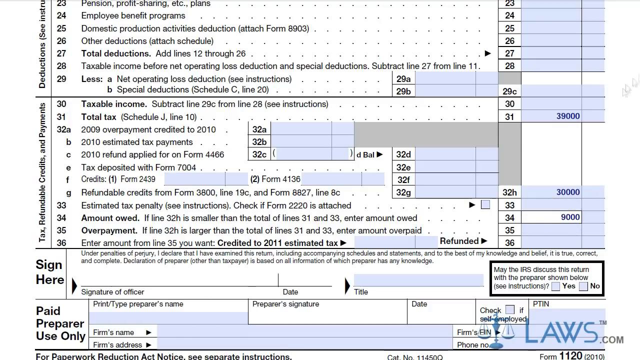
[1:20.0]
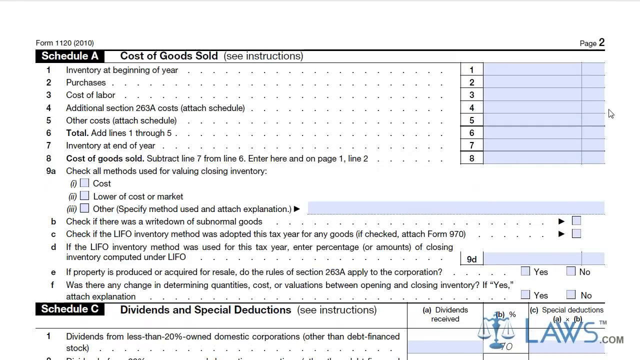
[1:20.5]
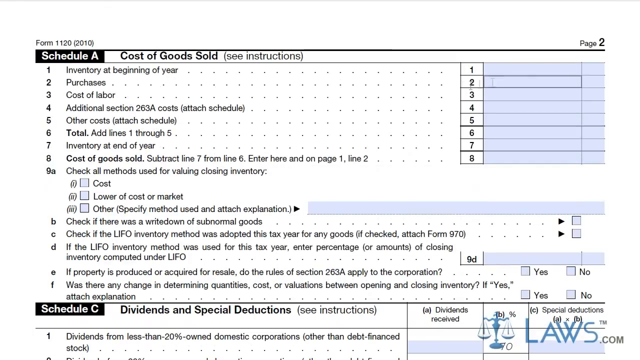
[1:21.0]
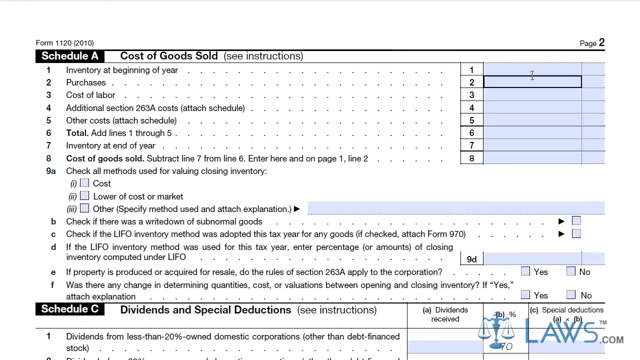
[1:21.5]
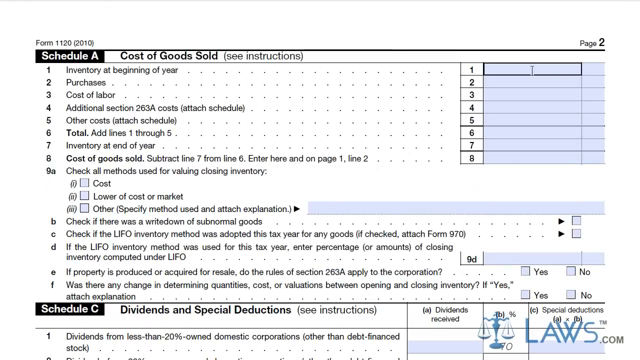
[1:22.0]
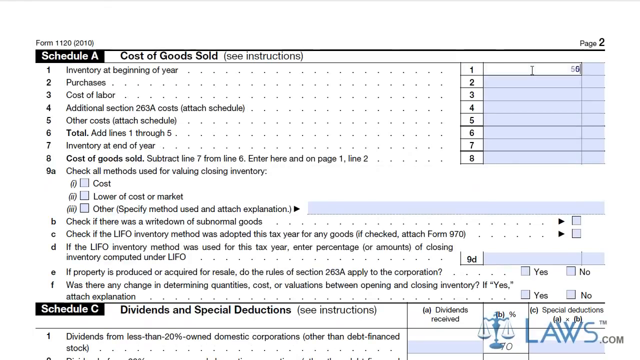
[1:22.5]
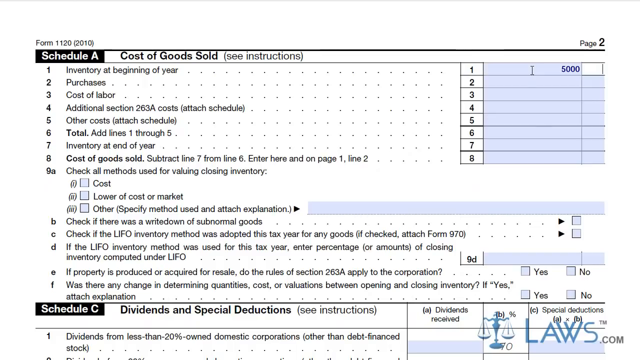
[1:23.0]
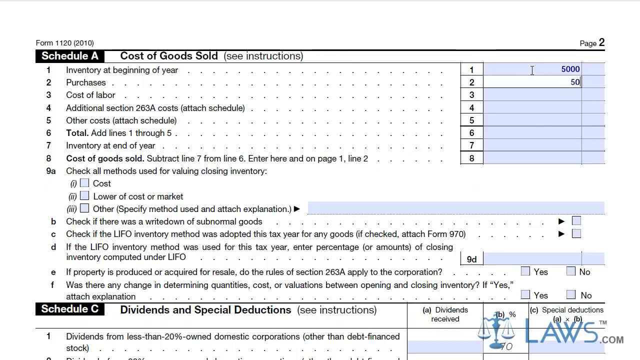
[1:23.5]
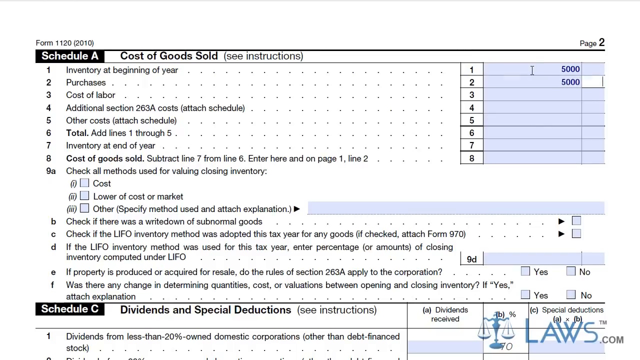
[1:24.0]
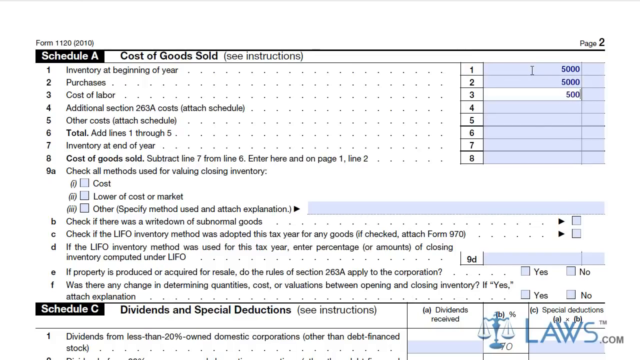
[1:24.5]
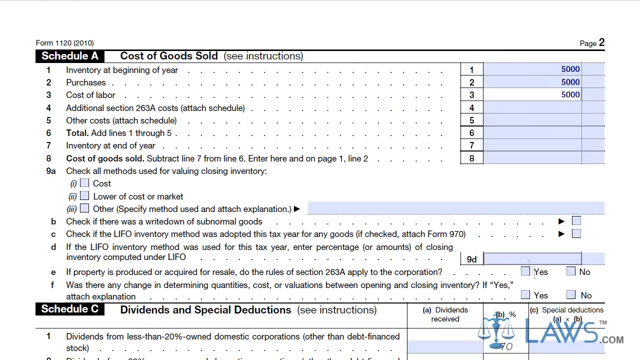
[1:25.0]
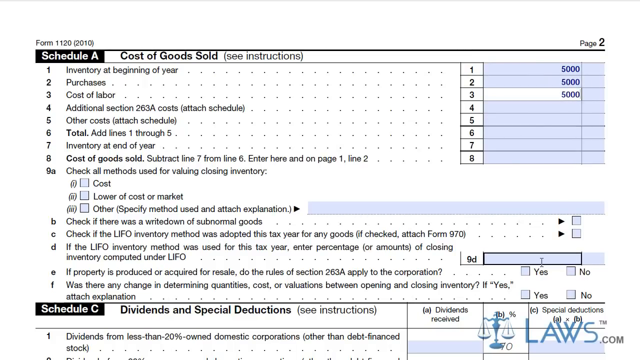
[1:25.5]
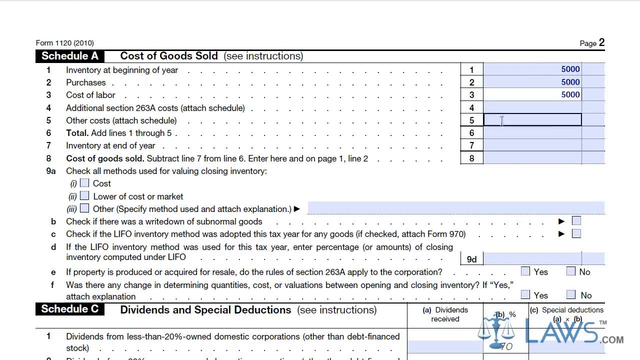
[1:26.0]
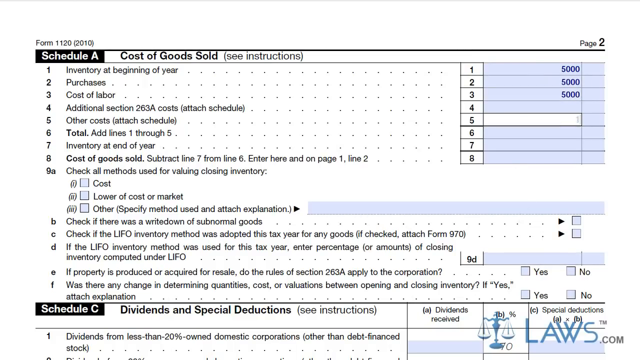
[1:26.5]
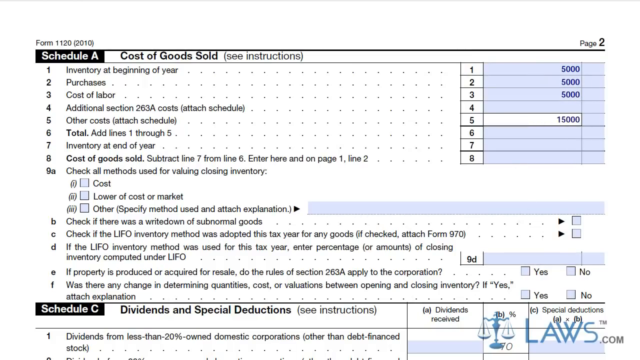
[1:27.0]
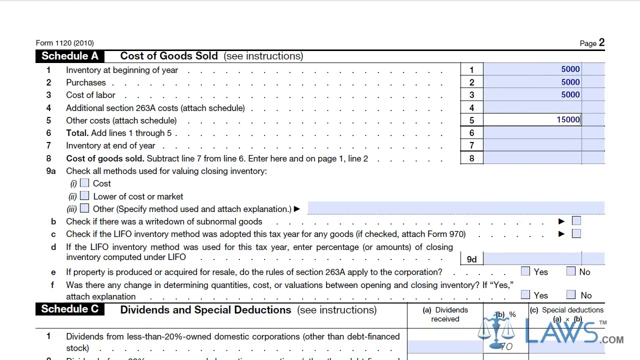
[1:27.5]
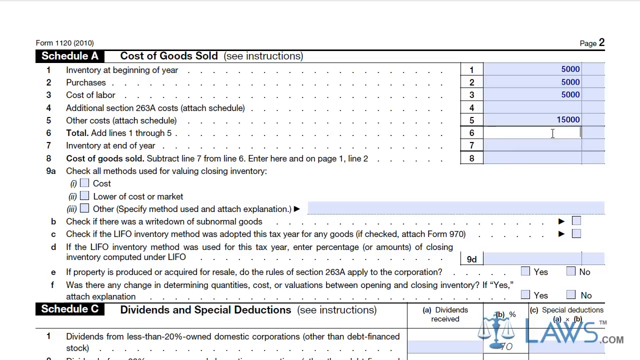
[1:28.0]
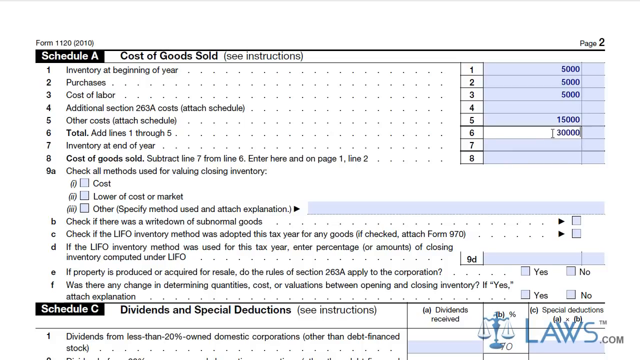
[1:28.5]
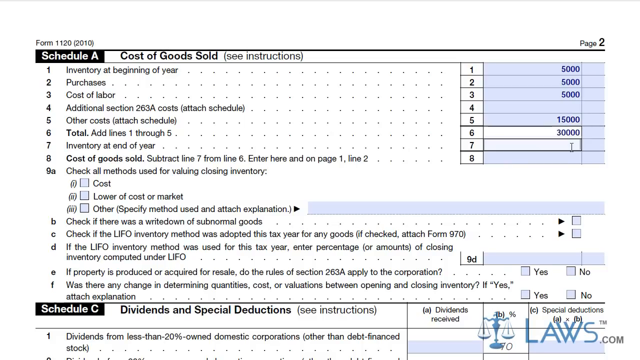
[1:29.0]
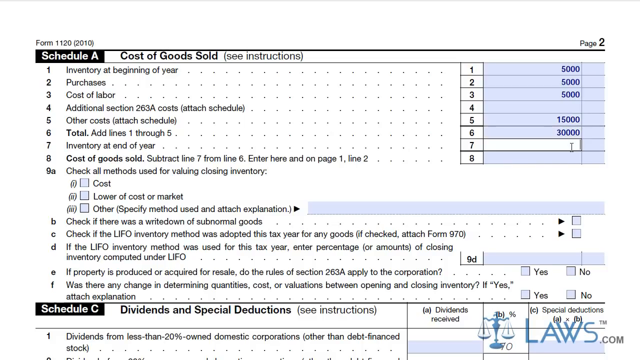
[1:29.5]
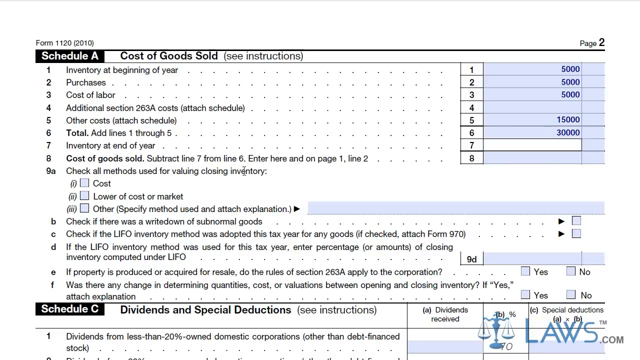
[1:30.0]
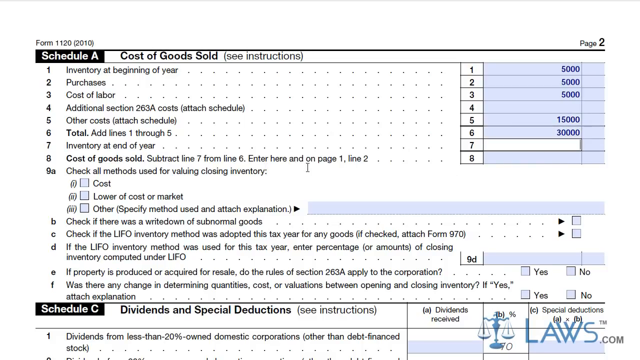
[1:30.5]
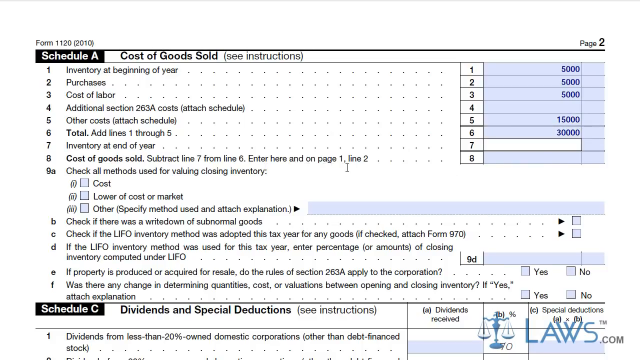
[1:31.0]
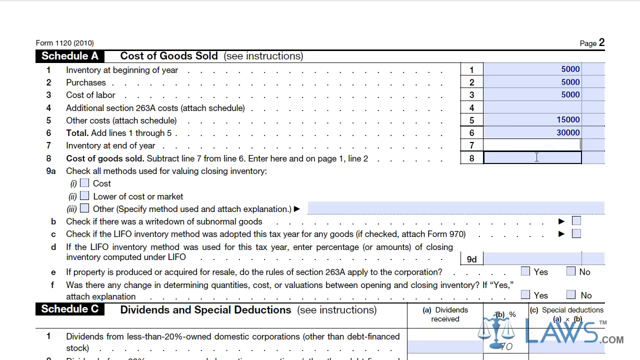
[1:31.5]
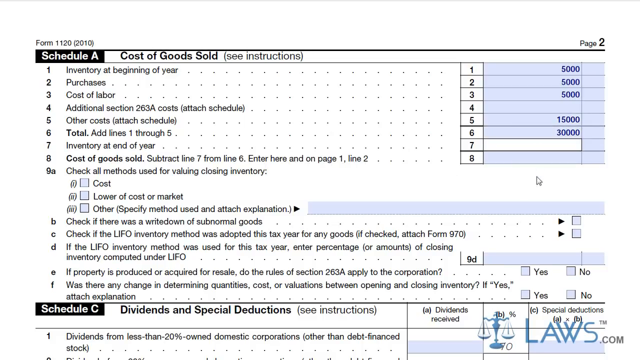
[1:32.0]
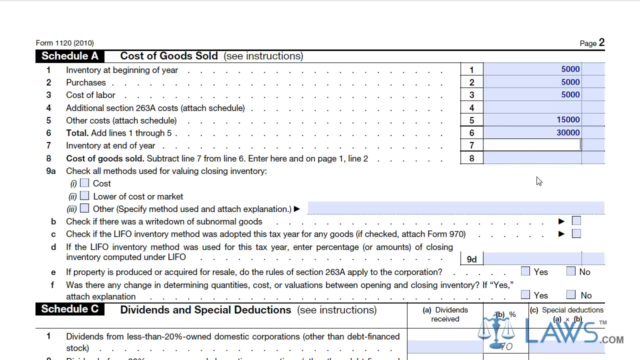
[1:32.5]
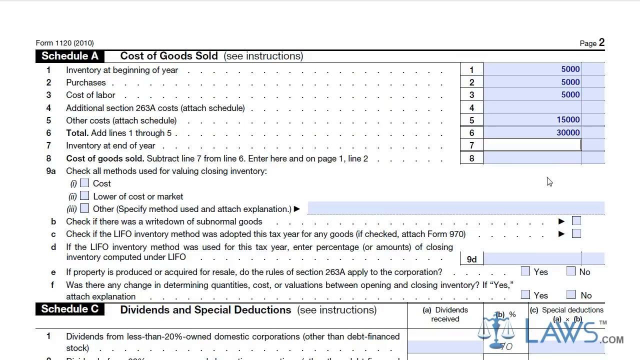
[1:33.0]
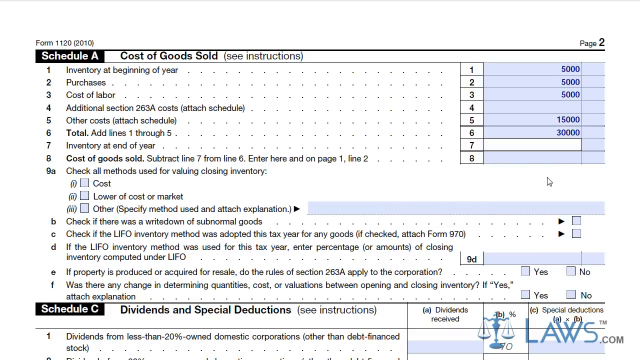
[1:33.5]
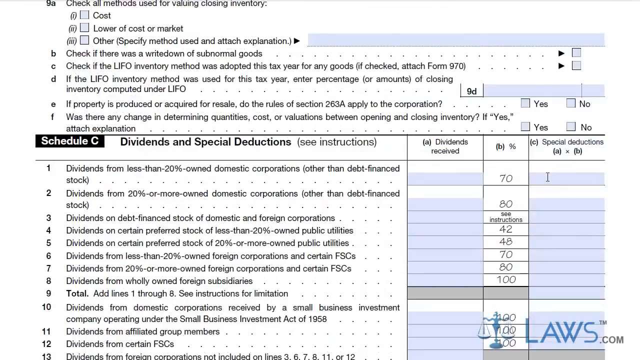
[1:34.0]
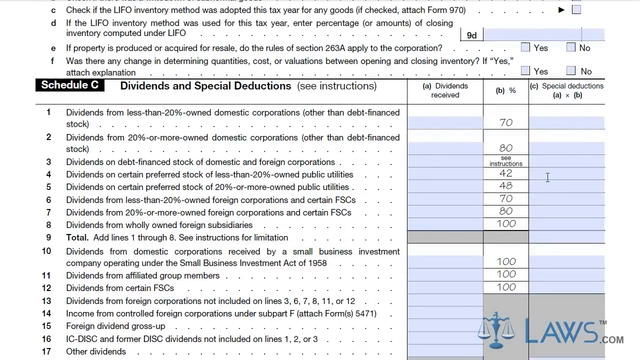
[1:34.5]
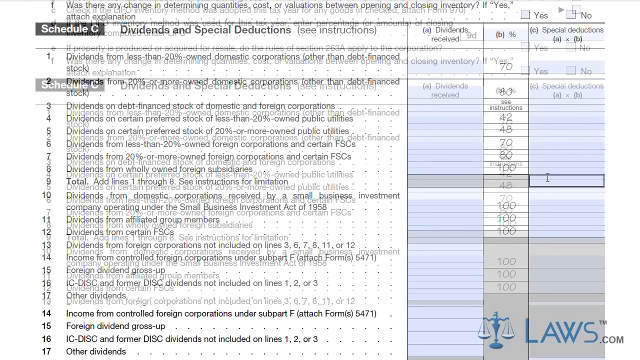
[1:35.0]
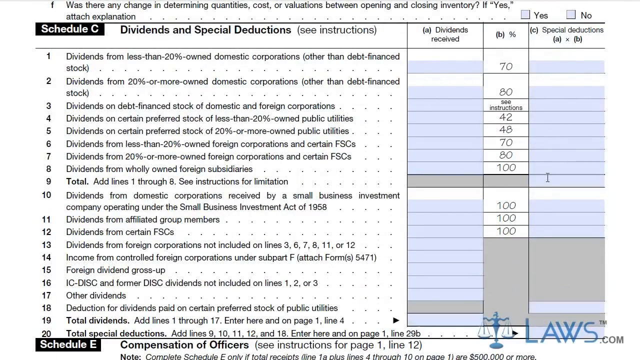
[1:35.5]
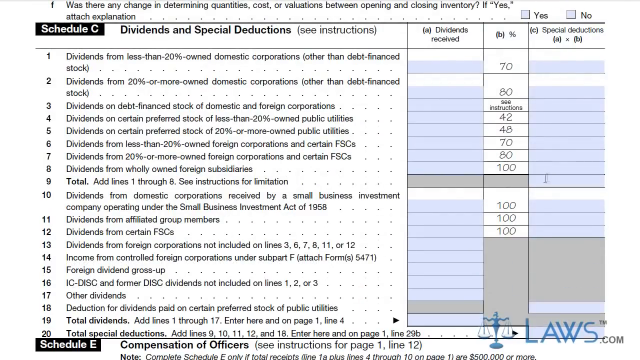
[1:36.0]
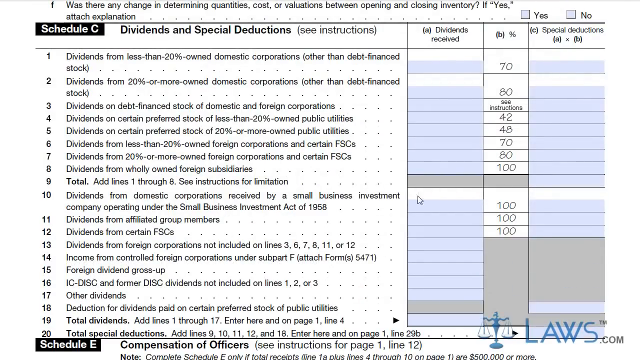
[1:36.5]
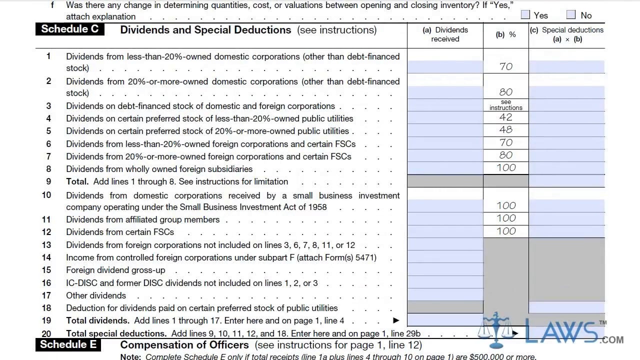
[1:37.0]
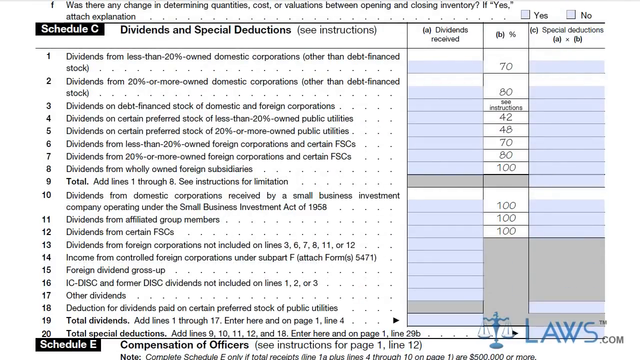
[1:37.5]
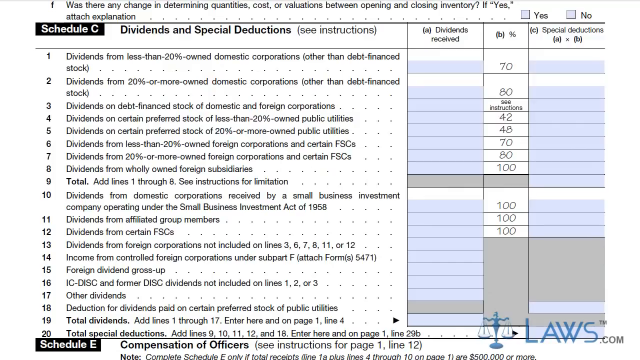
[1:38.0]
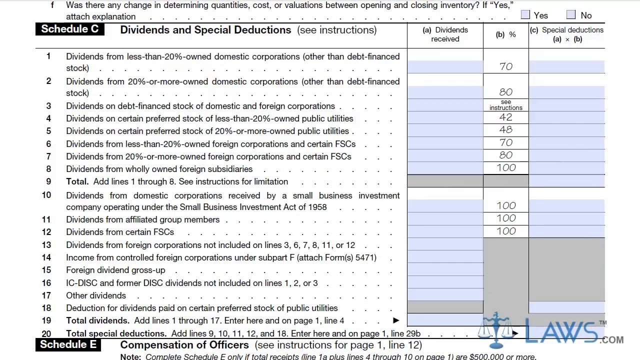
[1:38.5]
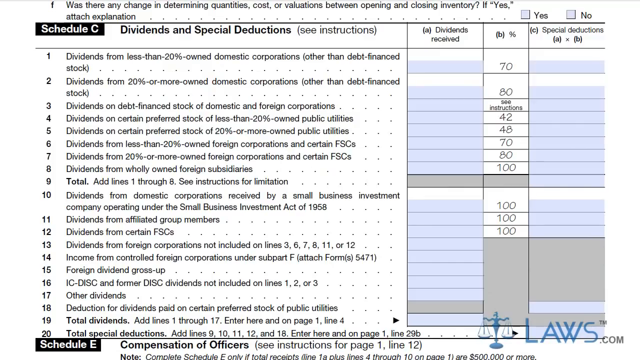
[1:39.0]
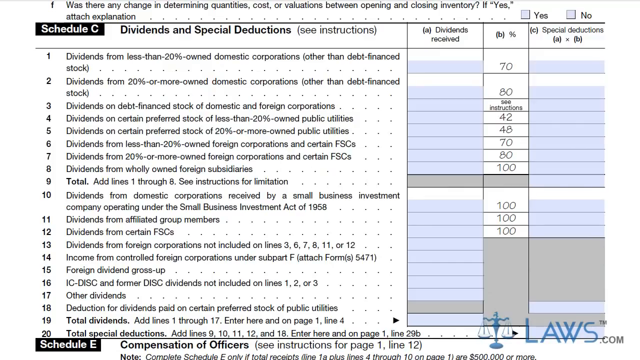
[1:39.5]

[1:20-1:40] Page two shows Schedule A, Cost of Goods Sold. Its lines are: 1, inventory at the beginning of the year; 2, purchases; 3, cost of labor; 4, additional Section 263A costs; 5, other costs; 6, total; 7, inventory at end of year; 8, cost of goods sold; and 9, check methods used for valuing closing inventory, with sub-items 9A, B, C, D, E, and F. Line 1 has $5,000 entered, line 2 $5,000, line 3 $5,000, line 5 $15,000, and line 6 30,000. The view then scrolls down to Schedule C, Dividends and Special Deductions, which has a slightly different layout with a dividends received column, special deductions, and a percentage column with numbers filled in. This section has numbered lines going down through 29.